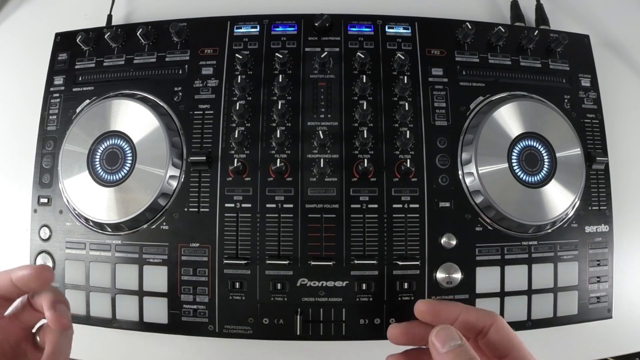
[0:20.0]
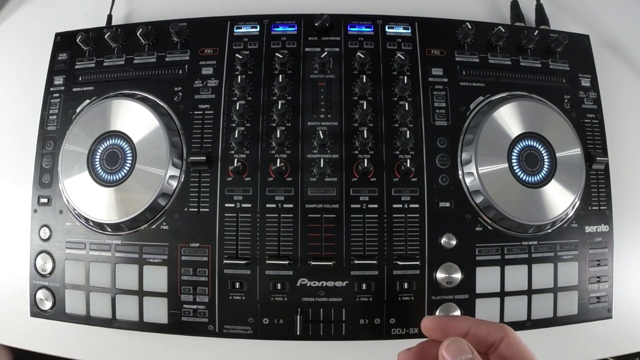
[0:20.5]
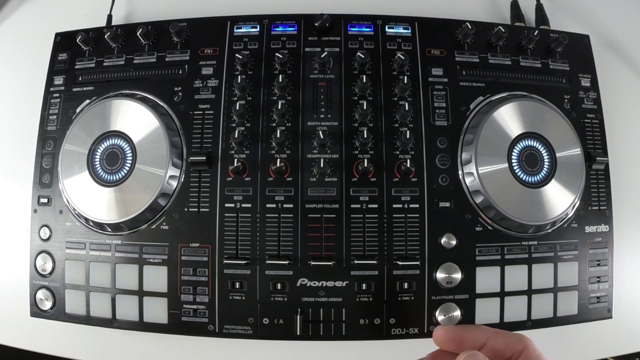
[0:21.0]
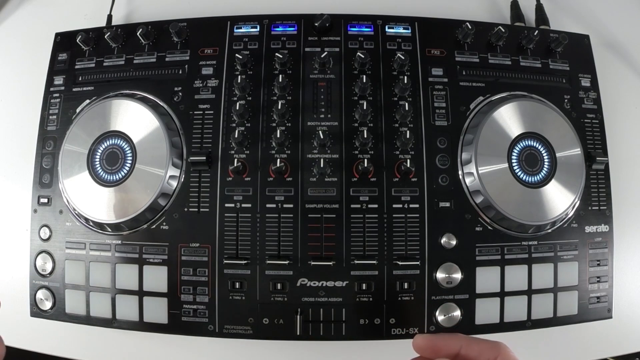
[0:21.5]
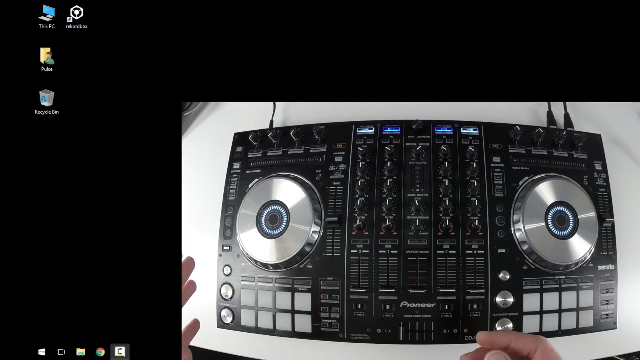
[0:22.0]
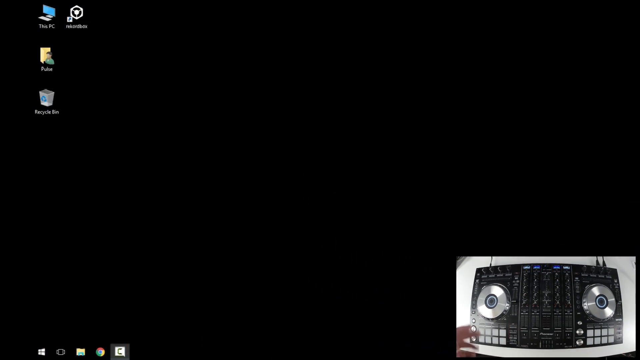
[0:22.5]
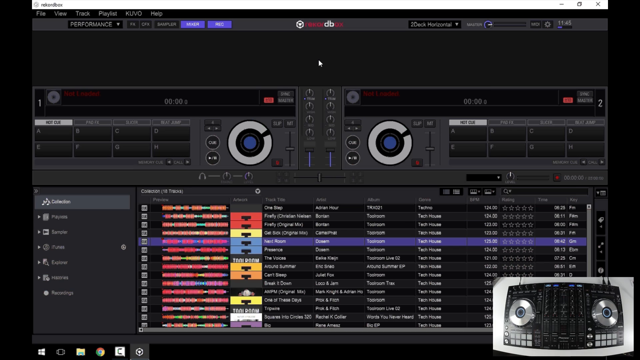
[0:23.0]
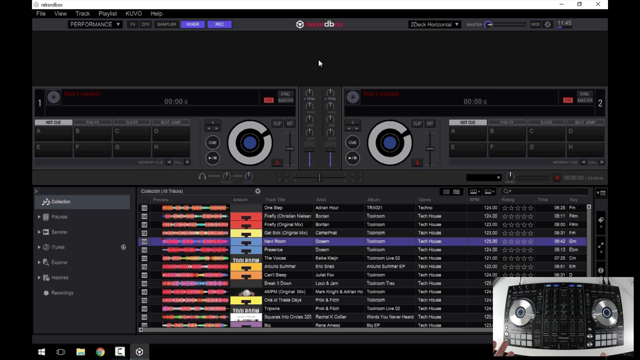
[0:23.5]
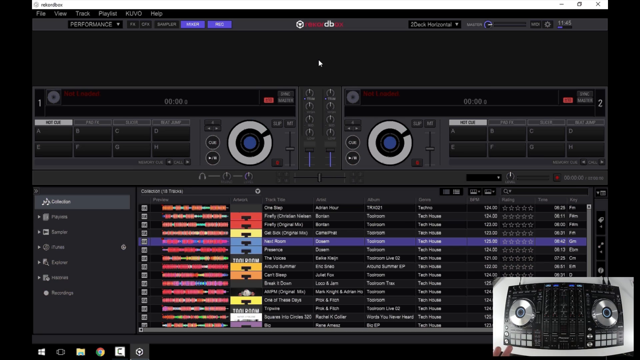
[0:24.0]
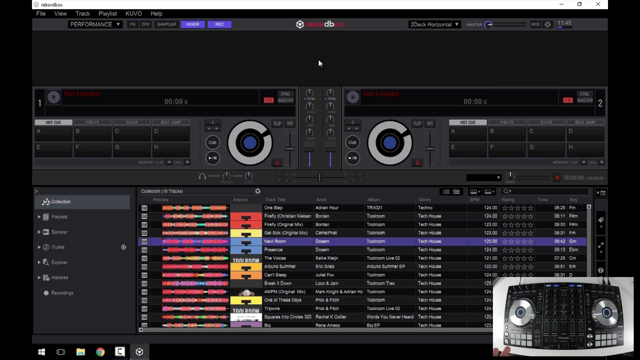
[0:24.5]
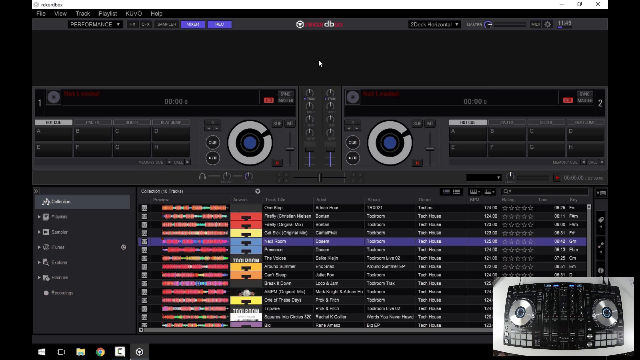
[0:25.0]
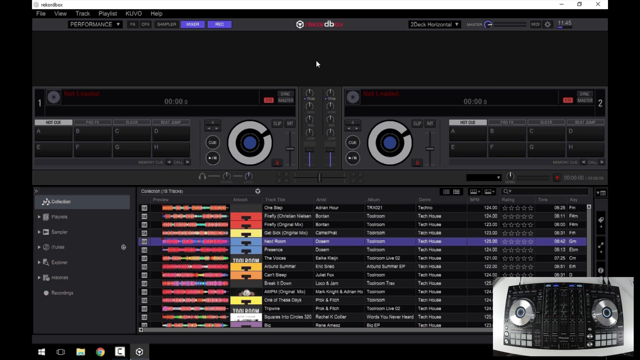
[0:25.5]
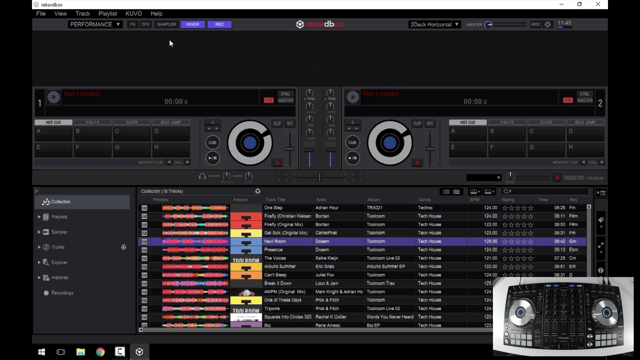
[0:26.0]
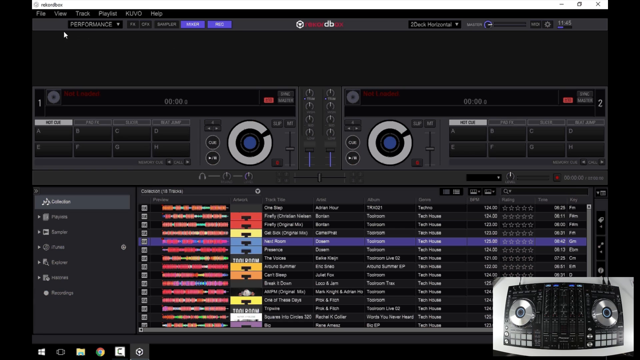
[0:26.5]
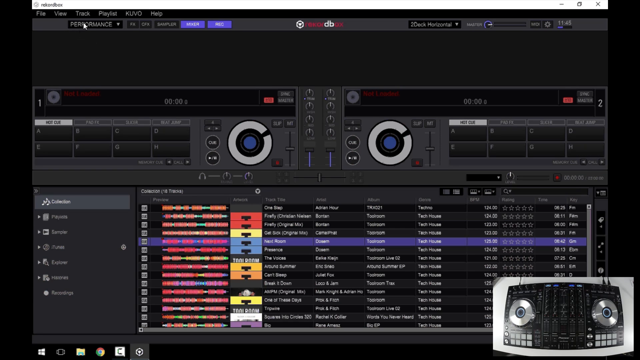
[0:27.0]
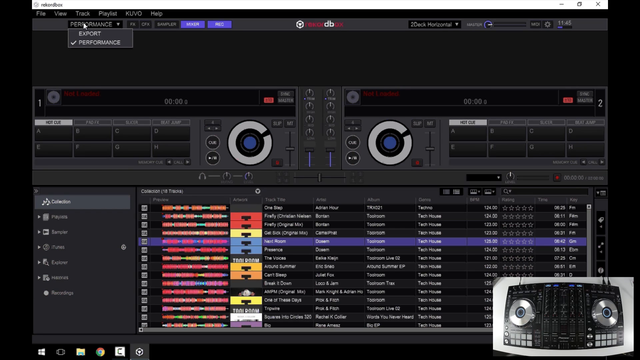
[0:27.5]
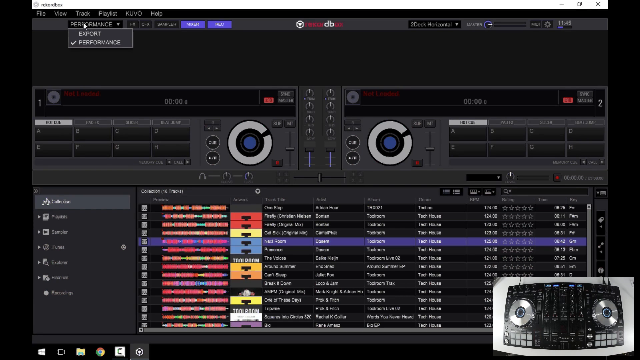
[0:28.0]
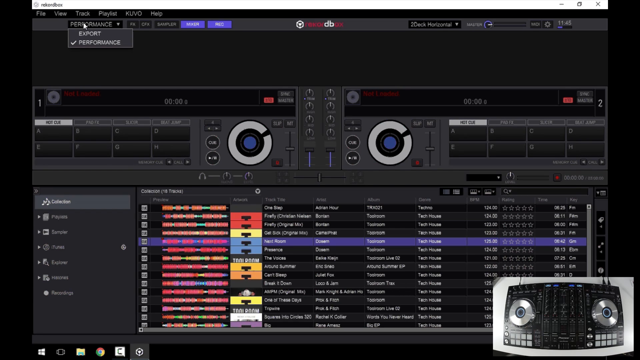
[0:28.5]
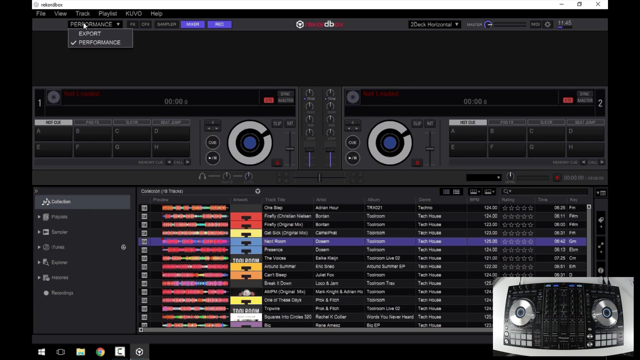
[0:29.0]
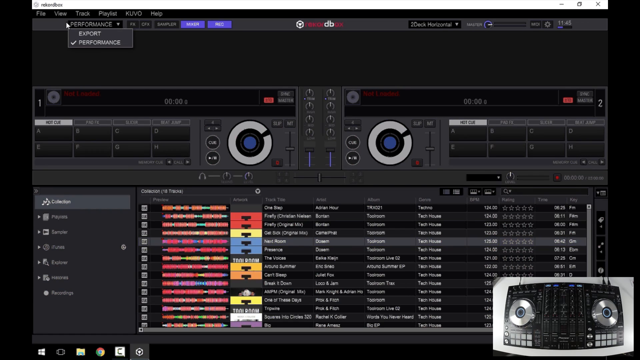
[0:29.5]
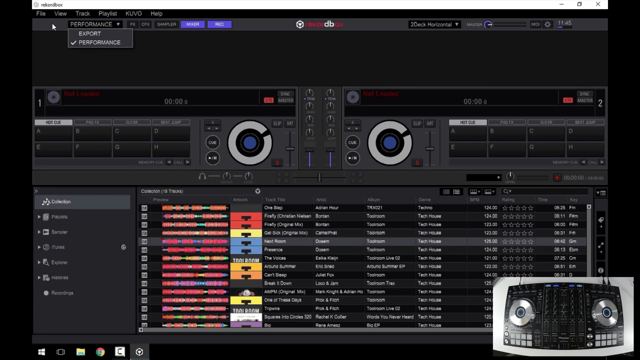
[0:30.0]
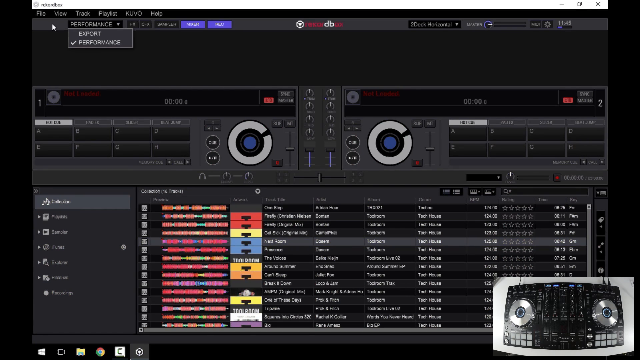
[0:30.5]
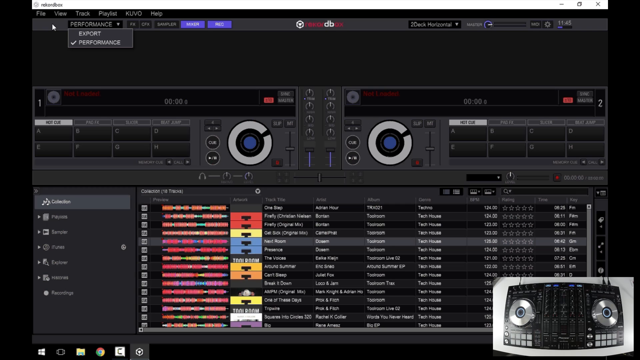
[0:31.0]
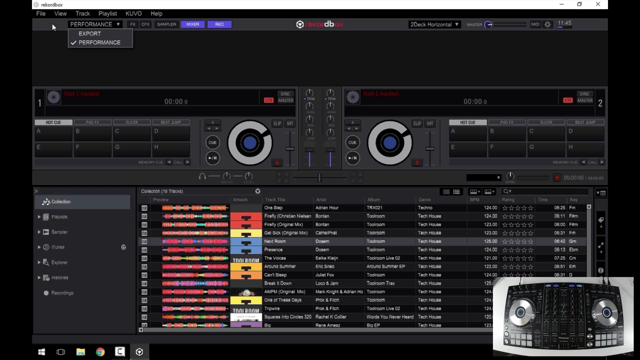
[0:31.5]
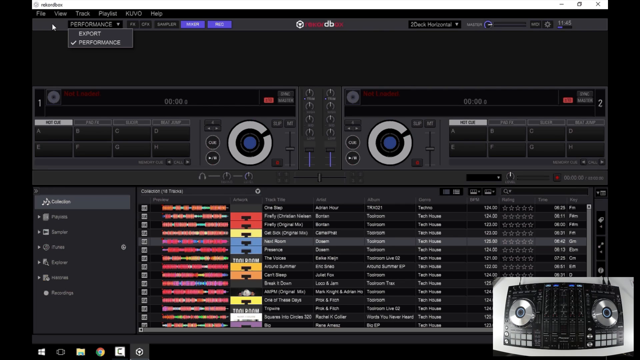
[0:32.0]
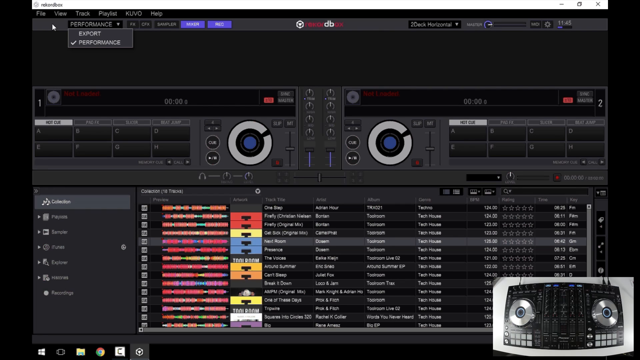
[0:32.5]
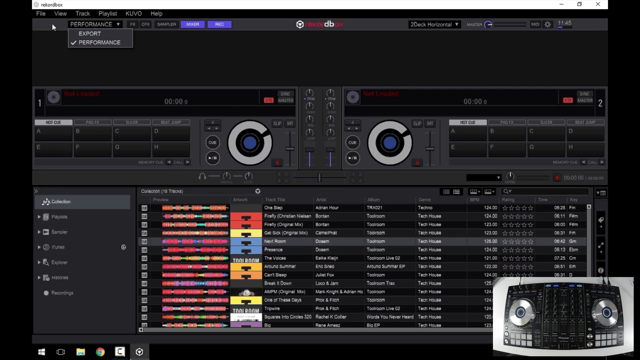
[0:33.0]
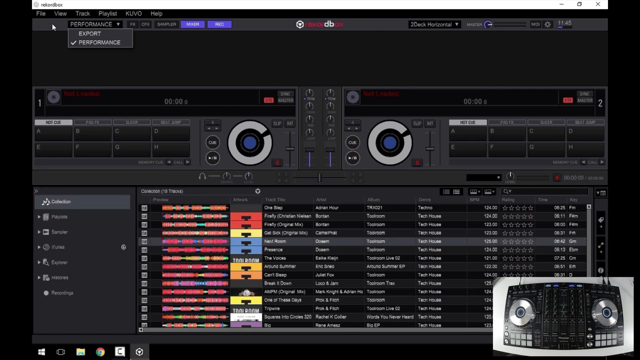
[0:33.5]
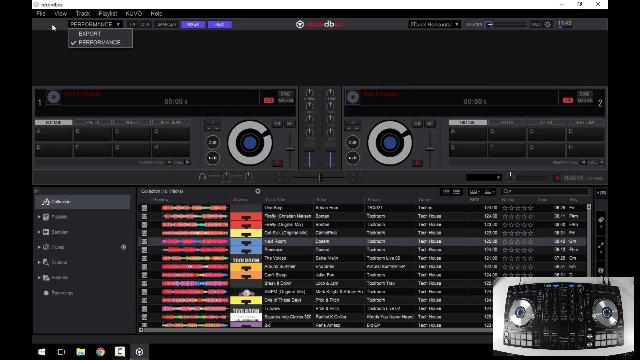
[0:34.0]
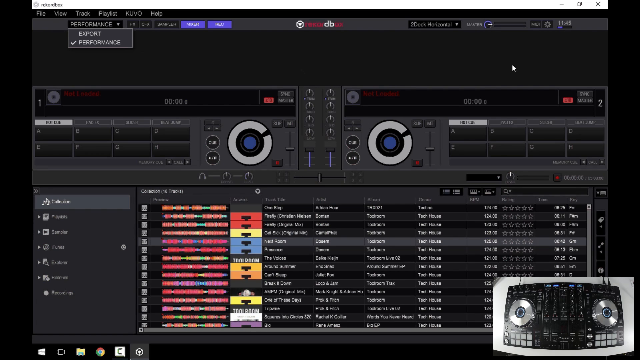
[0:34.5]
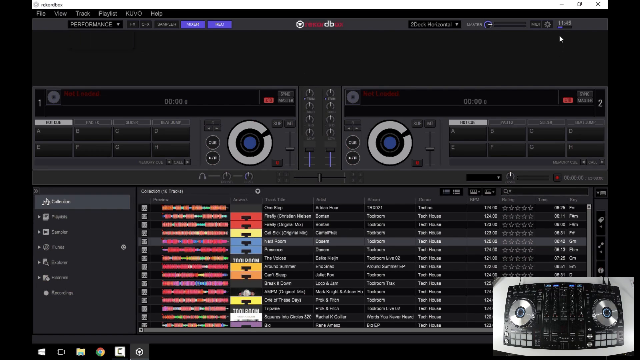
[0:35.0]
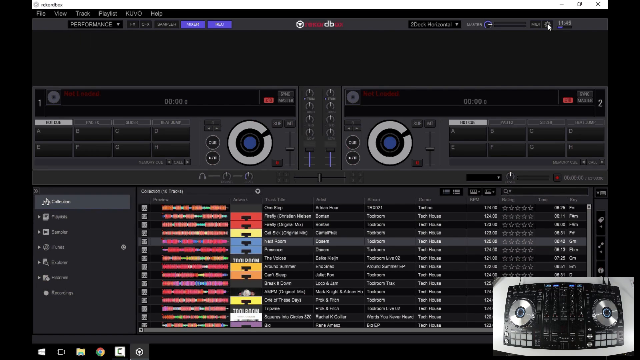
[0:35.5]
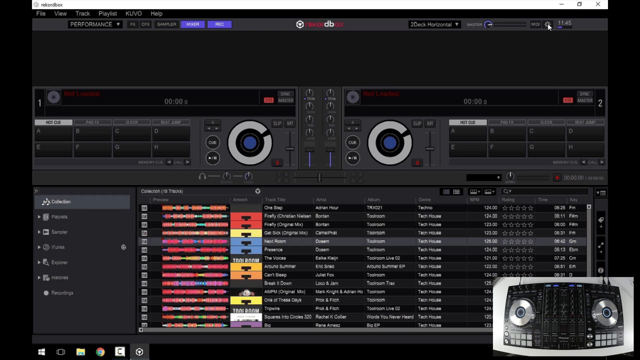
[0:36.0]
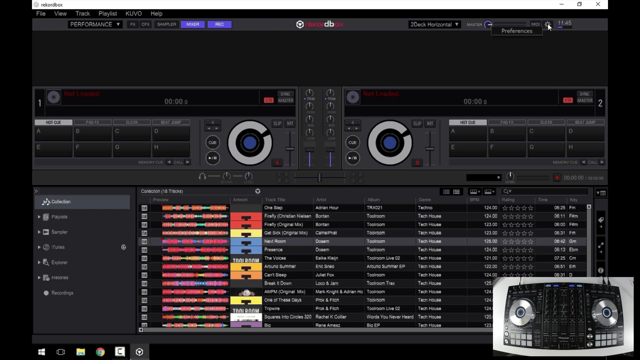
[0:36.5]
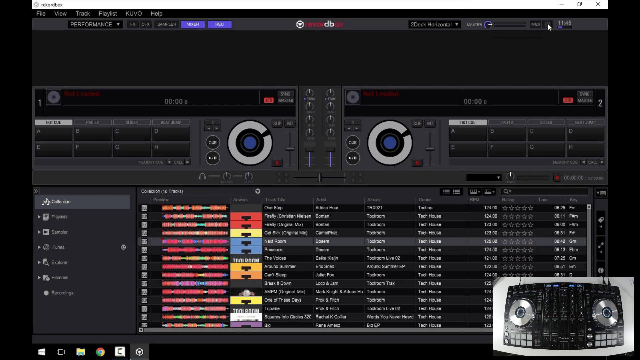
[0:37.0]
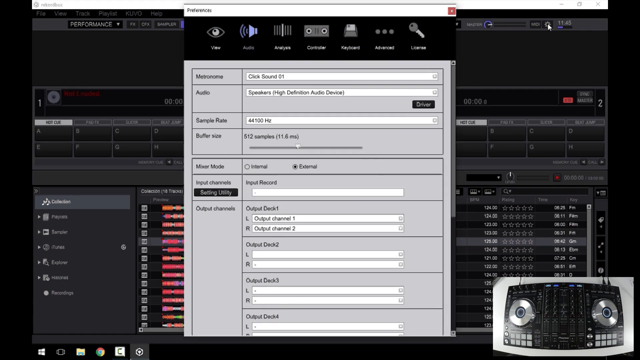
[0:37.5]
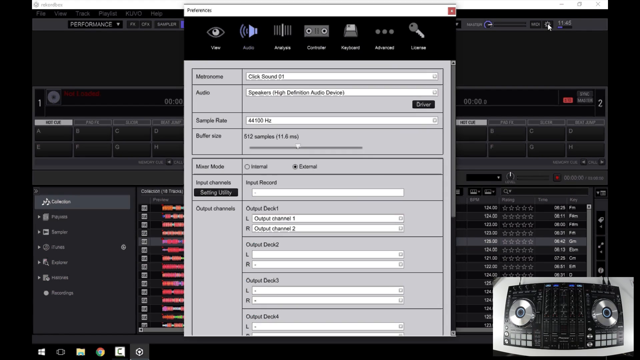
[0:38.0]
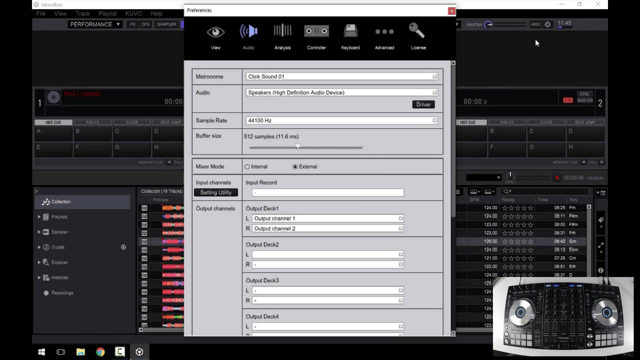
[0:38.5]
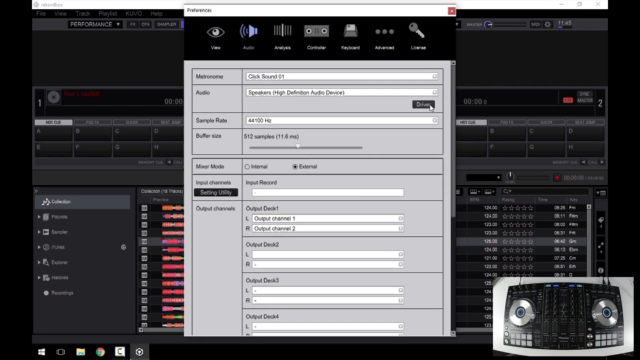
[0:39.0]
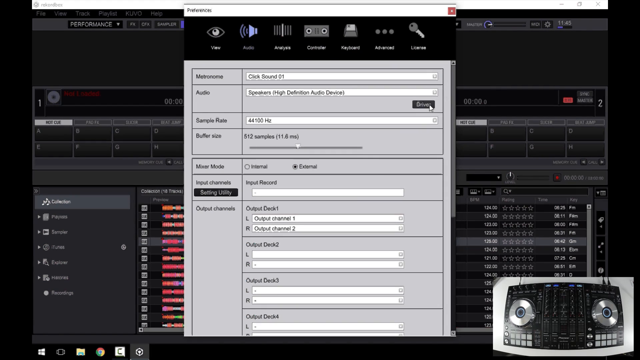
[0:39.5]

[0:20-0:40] The full-screen image of the Pioneer mixing desk continues, with the user's hands at the bottom of the frame pointing to something. The image then gets smaller and telescopes in towards the bottom right-hand corner, where it stays as a very small pop-out video. A computer screen takes its place, seemingly the control software for the mixing desk. From the bottom of the screen up to halfway there is a row of different labels that cannot be read, along with tables of figures and descriptions that also cannot be read. Above that is a representation of the two dials and some horizontal buttons in the middle. The user moves the cursor to different areas and goes to the settings for the mixer, and a drop-down menu appears with headings including "audio", "single rate" and "buffer size".